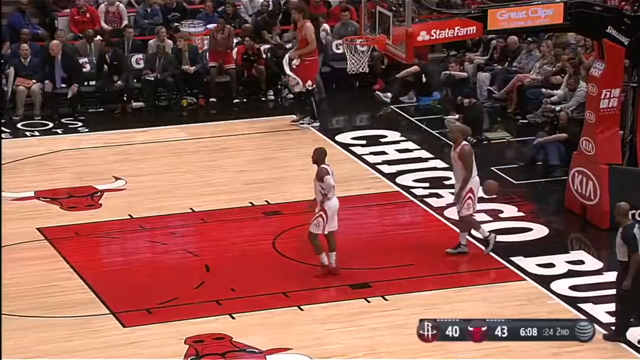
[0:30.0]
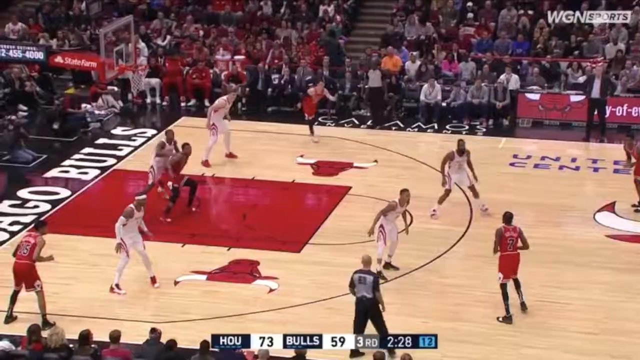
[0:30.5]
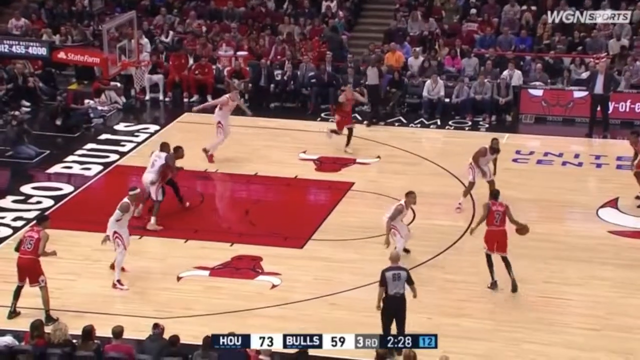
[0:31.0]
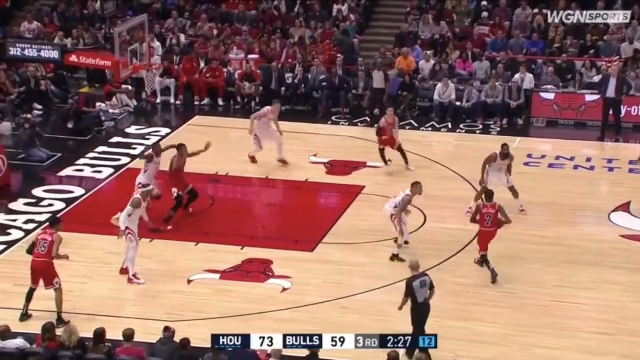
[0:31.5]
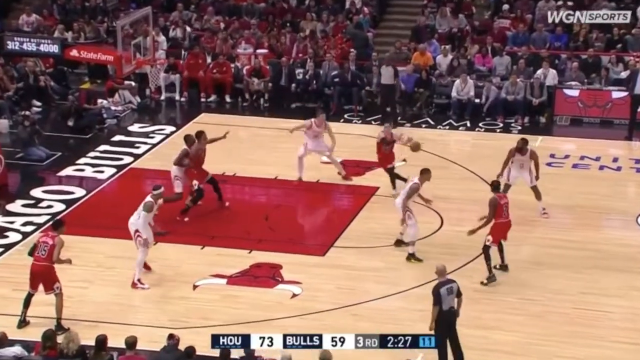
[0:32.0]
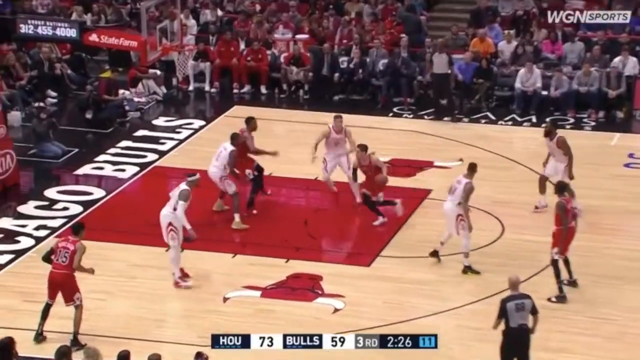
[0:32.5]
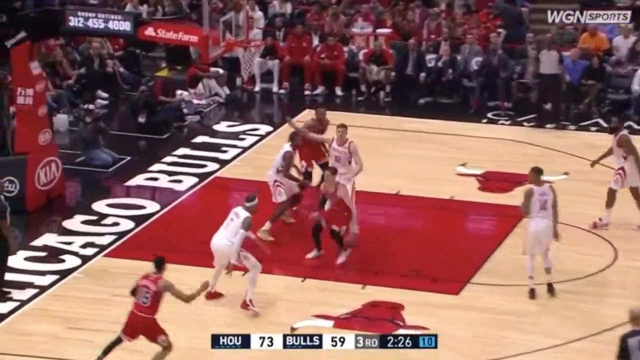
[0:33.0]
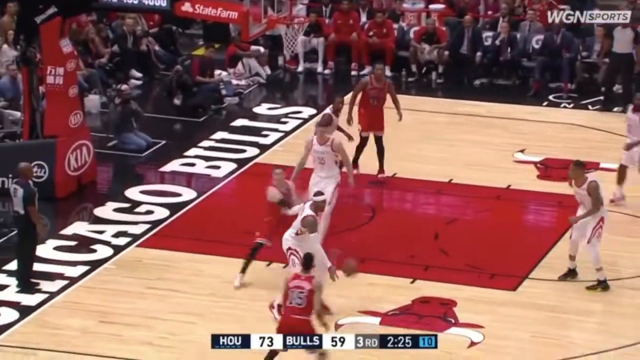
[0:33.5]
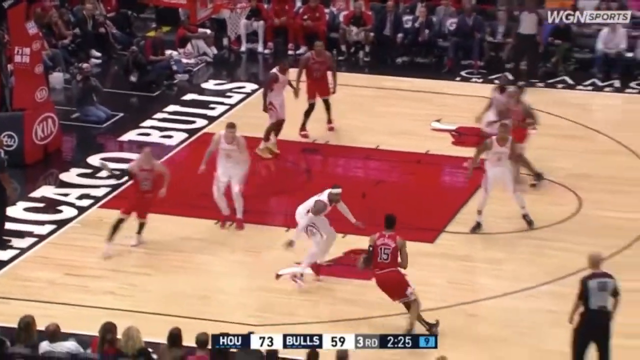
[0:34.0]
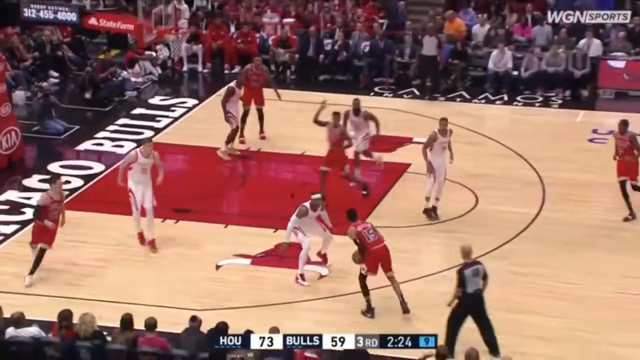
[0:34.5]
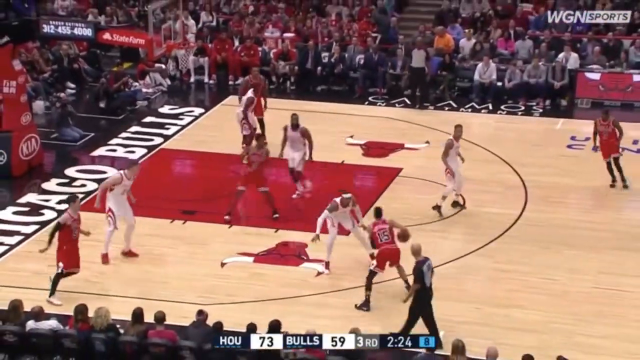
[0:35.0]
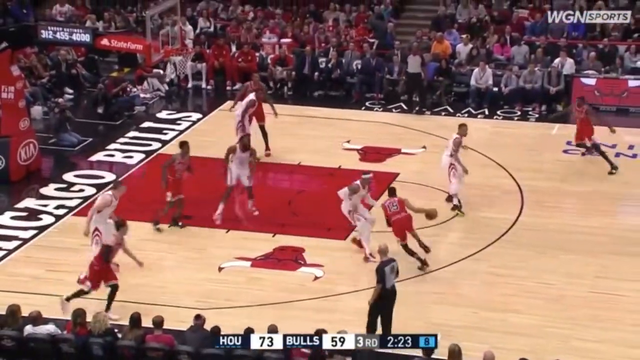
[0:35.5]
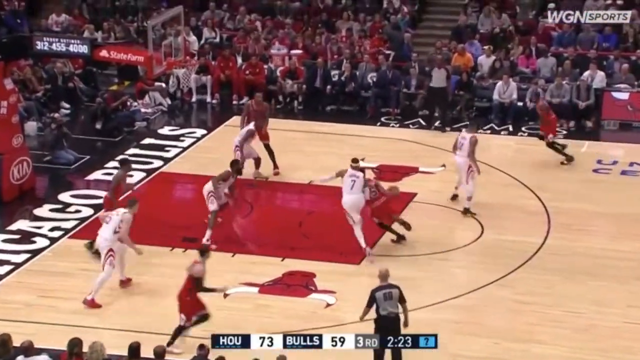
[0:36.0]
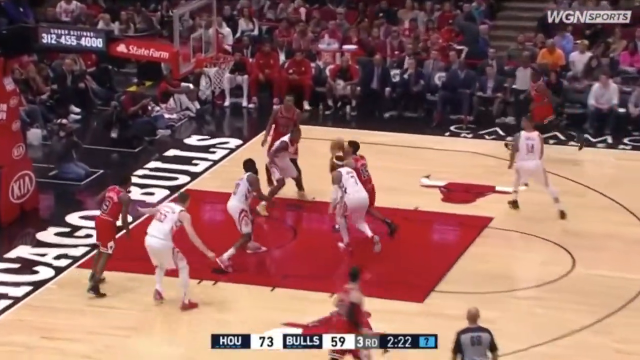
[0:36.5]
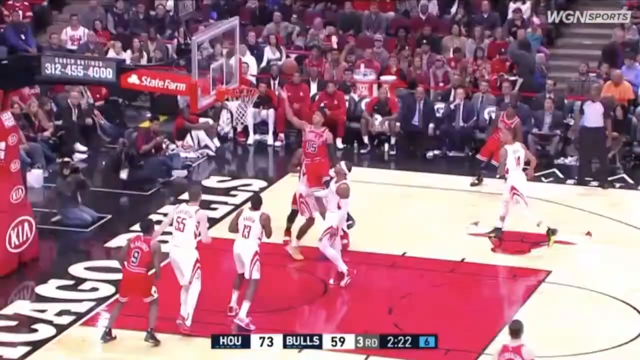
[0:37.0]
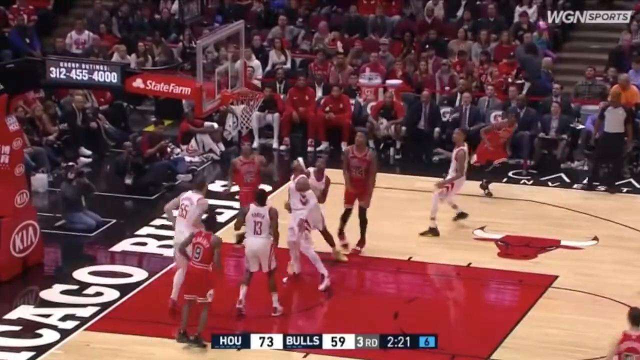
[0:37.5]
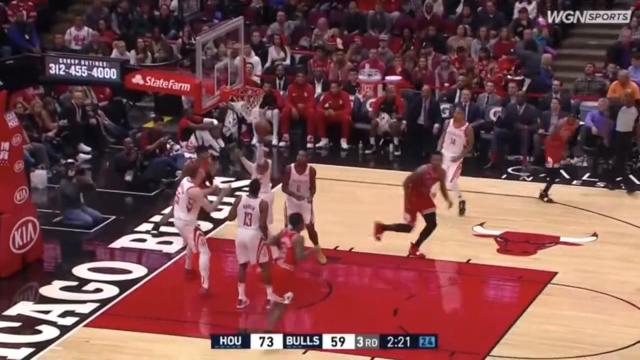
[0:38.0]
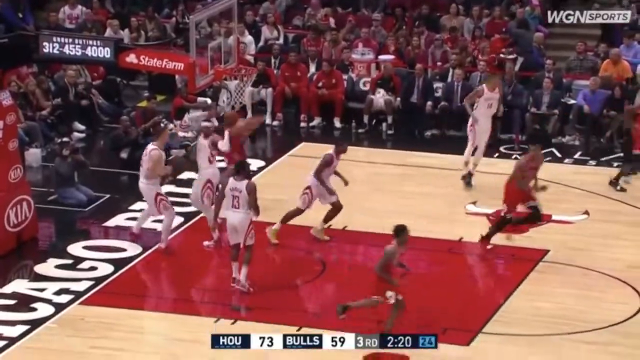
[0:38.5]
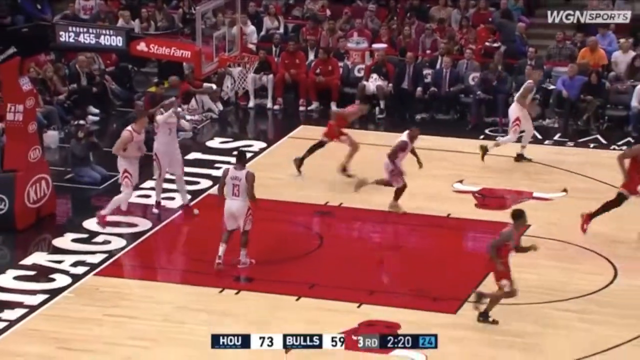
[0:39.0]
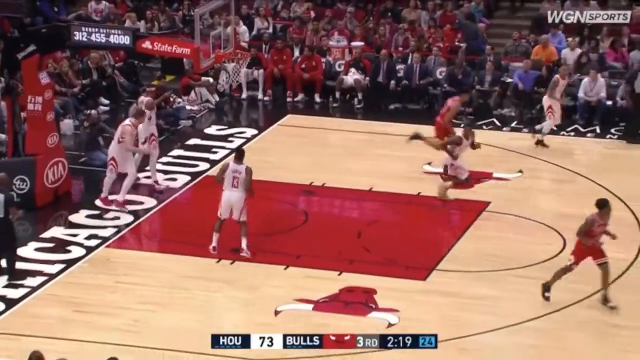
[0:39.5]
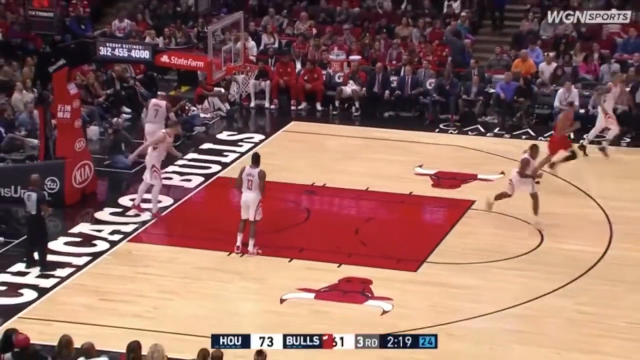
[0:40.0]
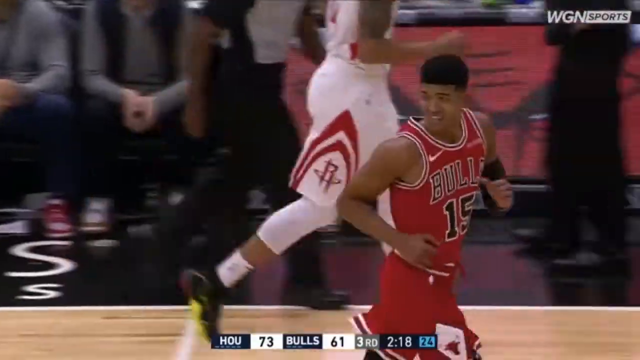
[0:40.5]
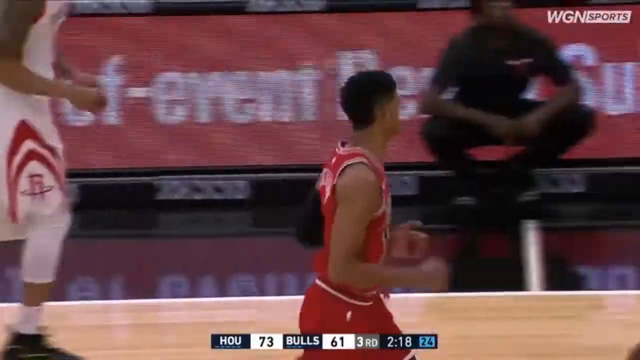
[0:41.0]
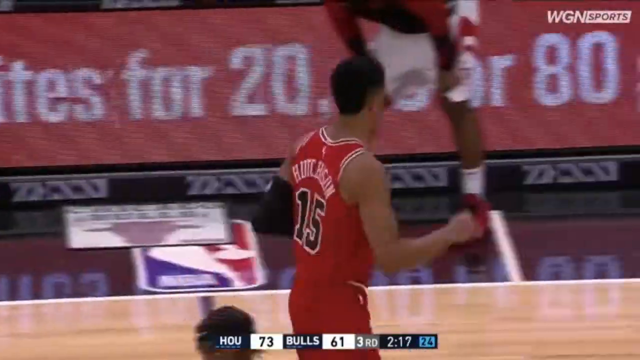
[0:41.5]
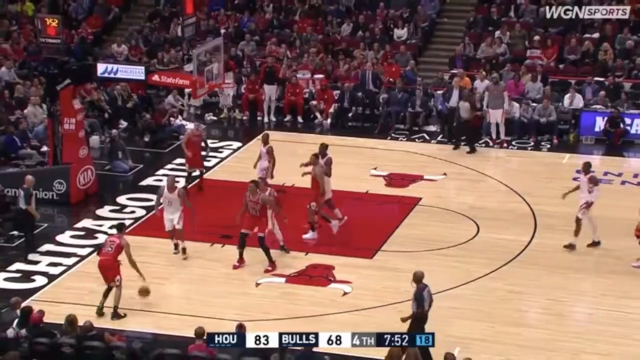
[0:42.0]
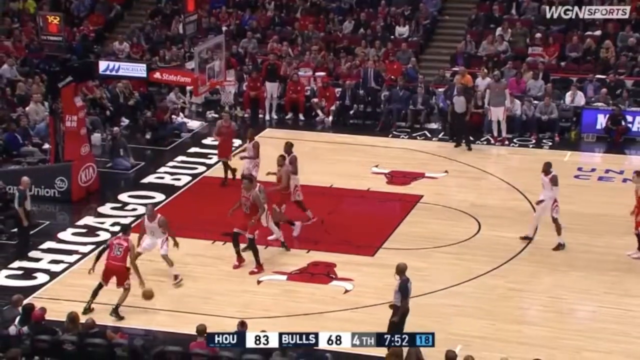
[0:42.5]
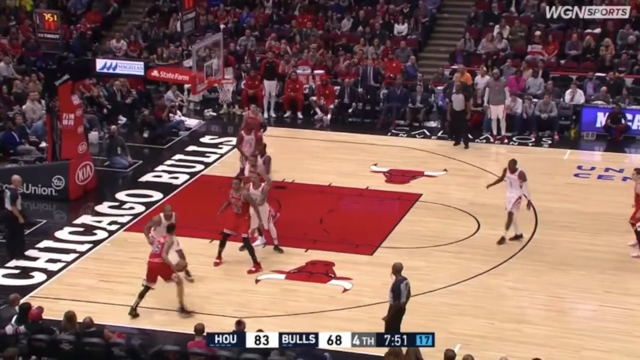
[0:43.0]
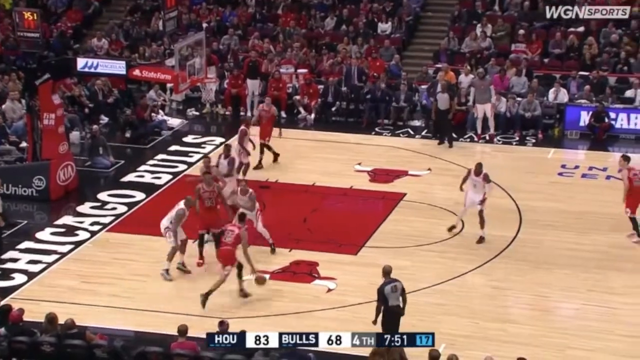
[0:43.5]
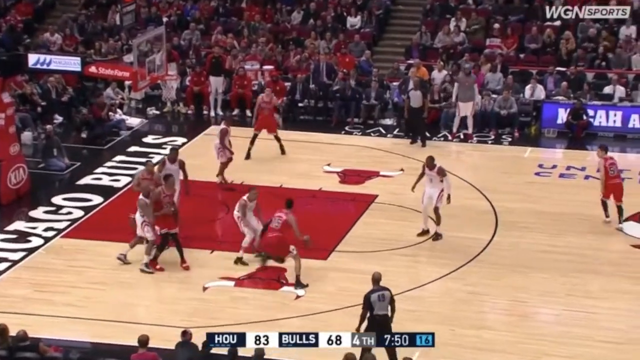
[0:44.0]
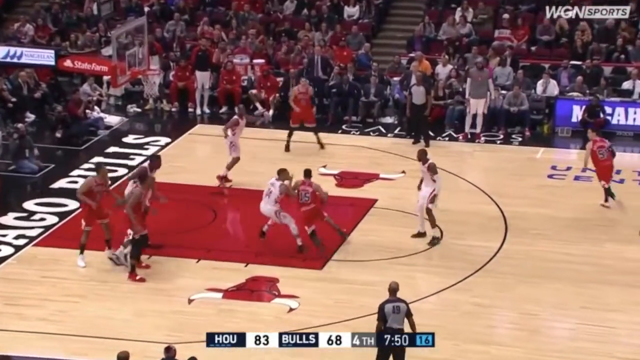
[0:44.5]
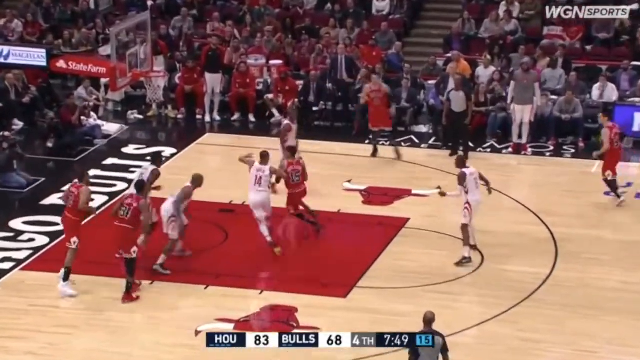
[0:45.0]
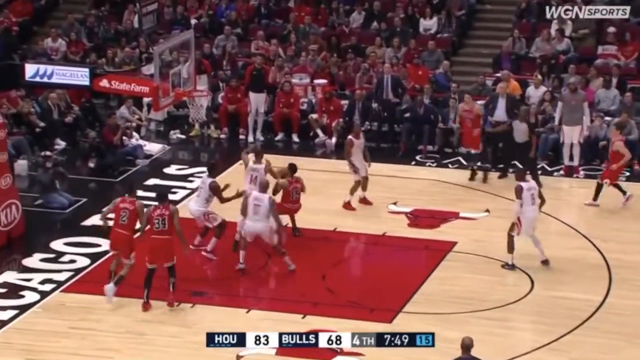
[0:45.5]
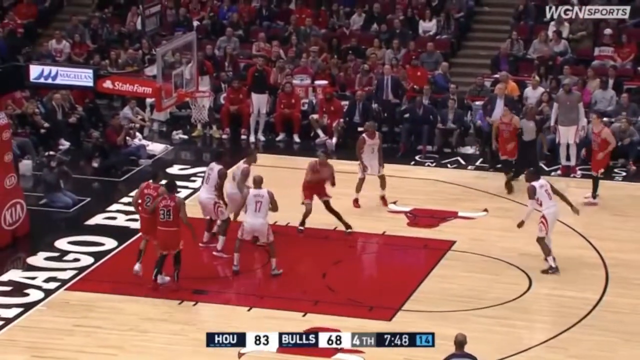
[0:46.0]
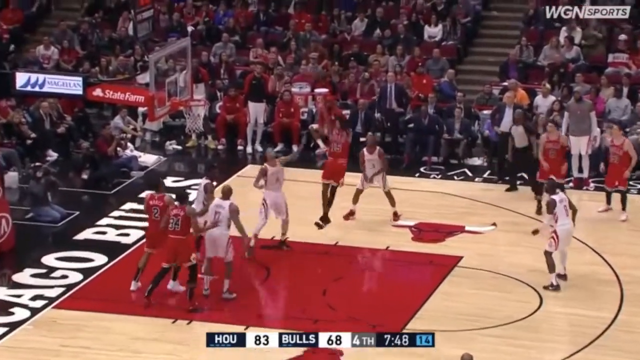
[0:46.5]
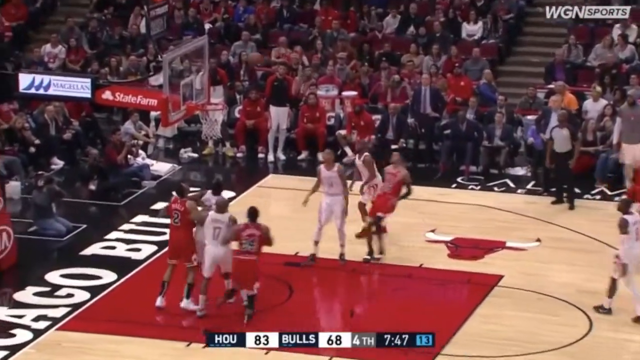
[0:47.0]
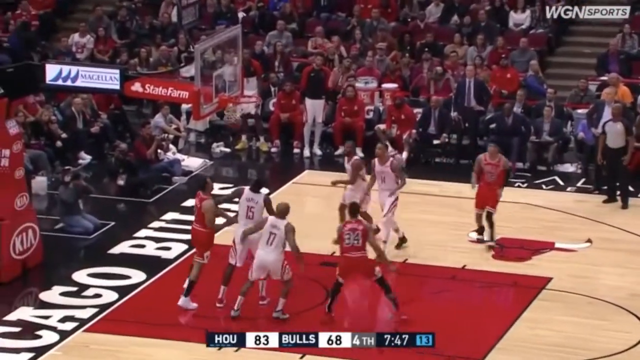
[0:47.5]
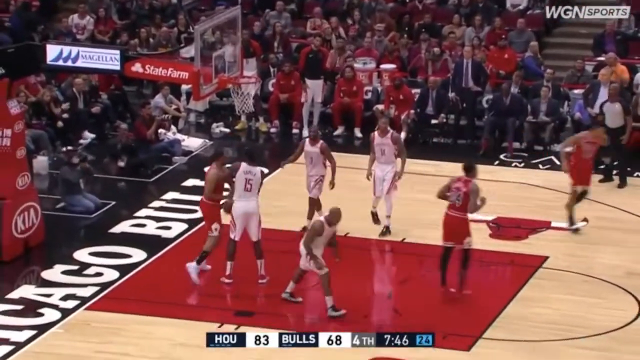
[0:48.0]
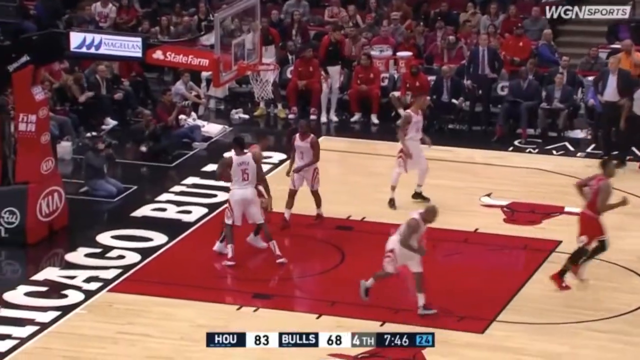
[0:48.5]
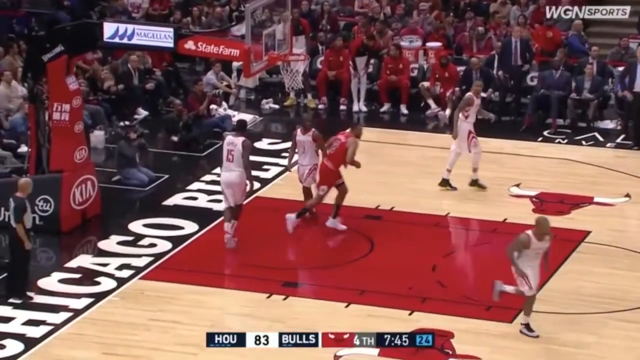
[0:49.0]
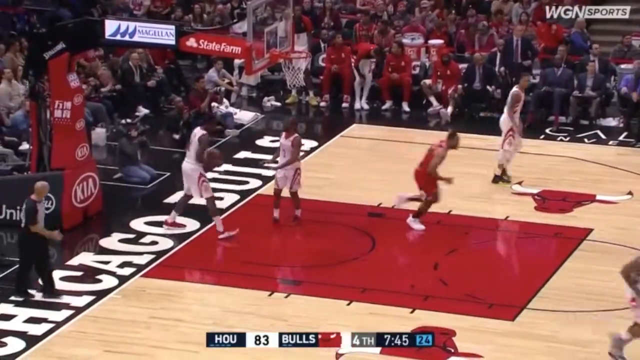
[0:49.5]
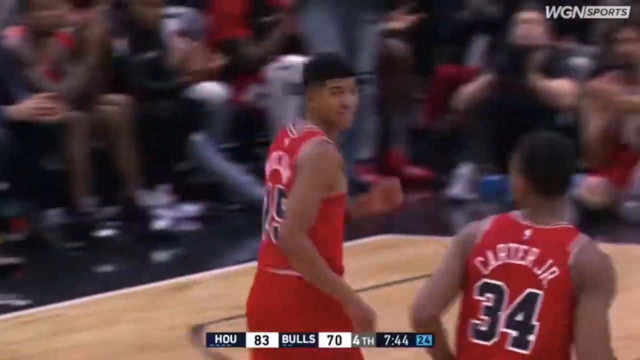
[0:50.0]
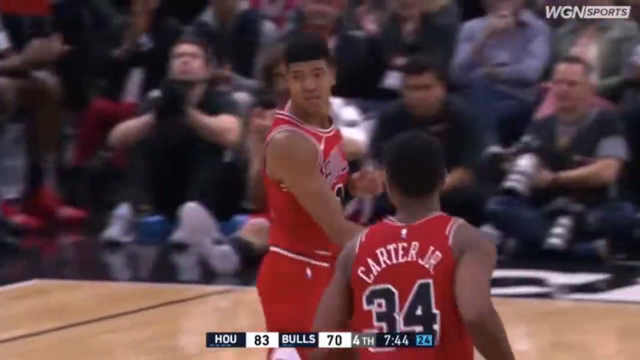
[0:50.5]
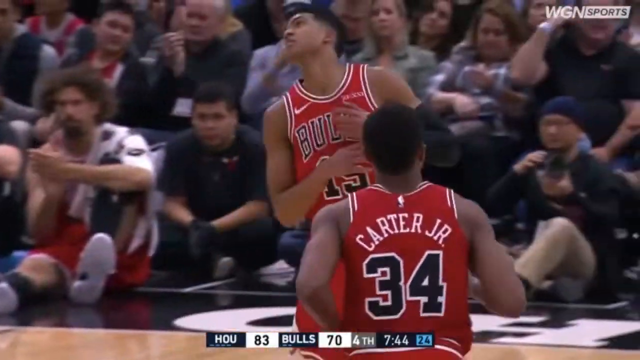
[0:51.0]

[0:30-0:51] The Chicago Bulls have the ball and are kind of passing it from one player to the next. Finally, number 15 shoots and scores. Number 15 is possibly the team captain, and he wears an arm brace around his funny bone. The score now shows HOU with 83 points and the Chicago Bulls with 70 points. At the end, the clock for the 4th quarter shows 7 minutes and 44 seconds. The game no longer seems close. The audience looks very full and seems intensely focused.